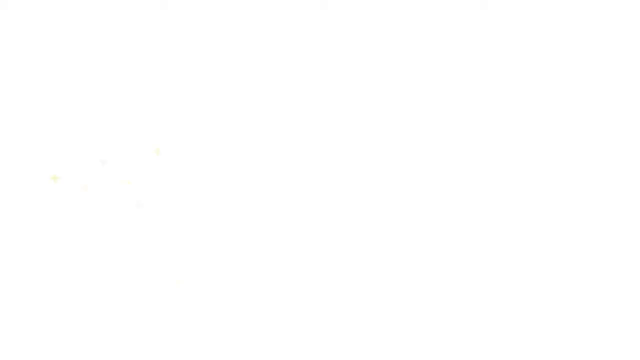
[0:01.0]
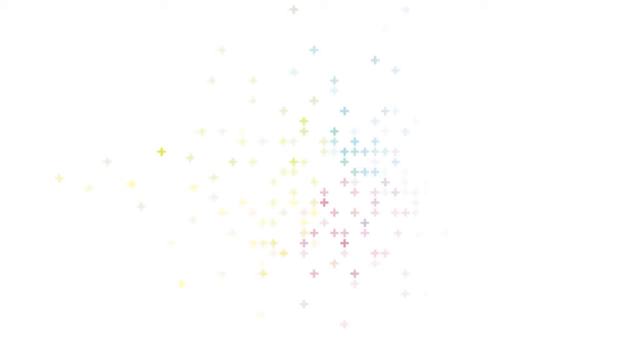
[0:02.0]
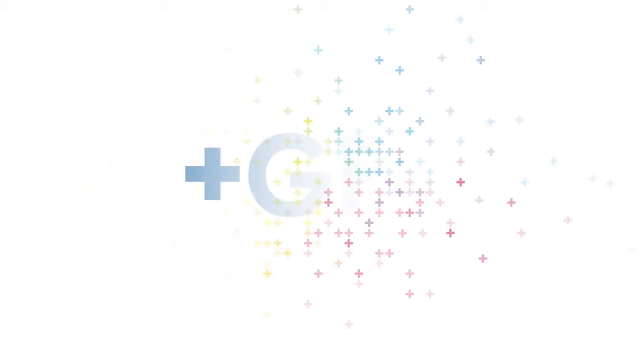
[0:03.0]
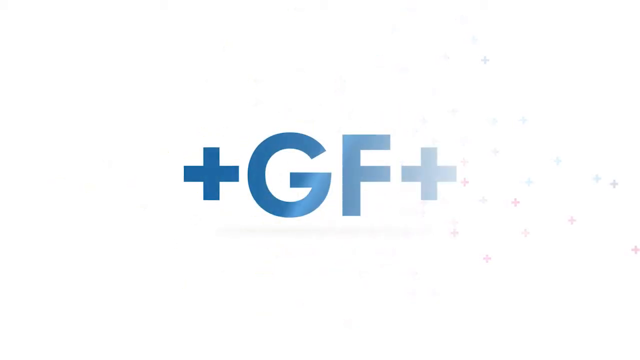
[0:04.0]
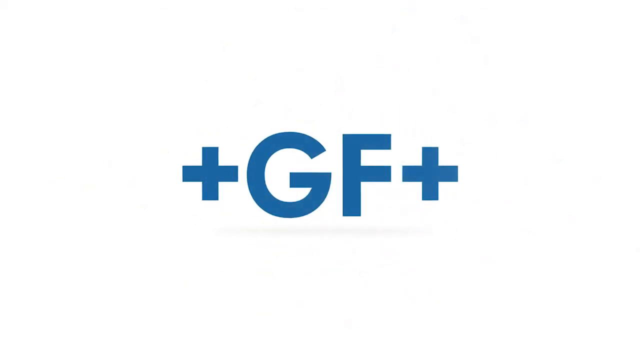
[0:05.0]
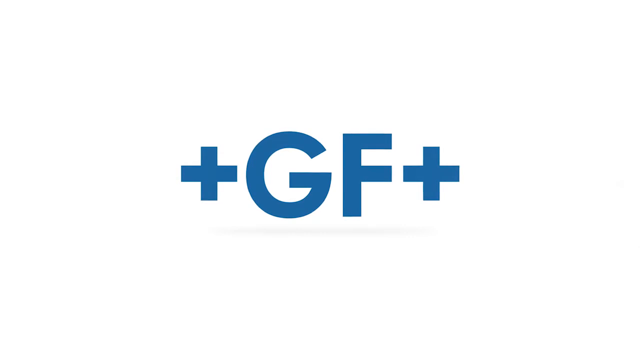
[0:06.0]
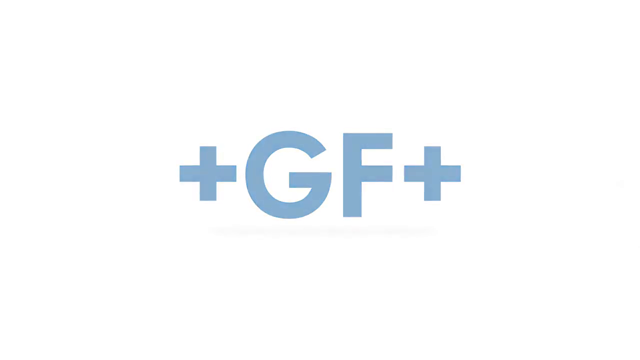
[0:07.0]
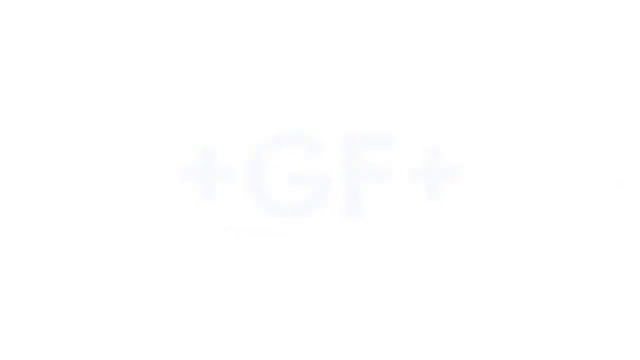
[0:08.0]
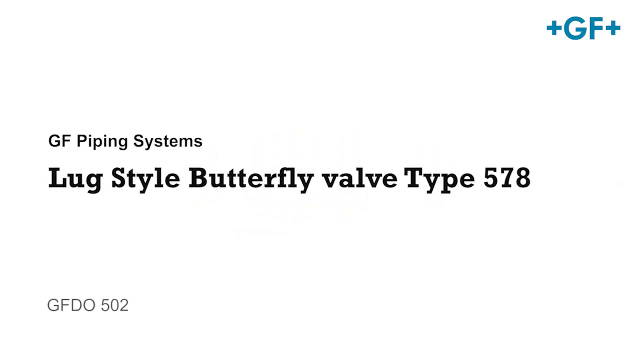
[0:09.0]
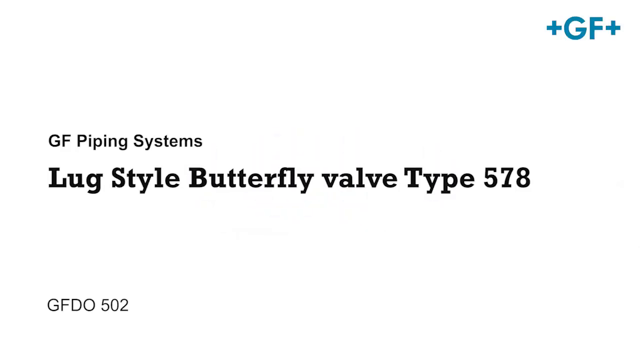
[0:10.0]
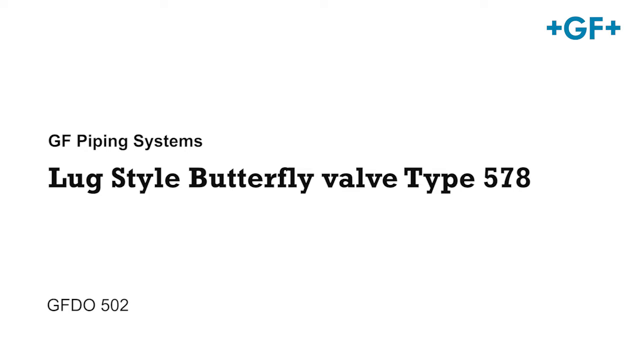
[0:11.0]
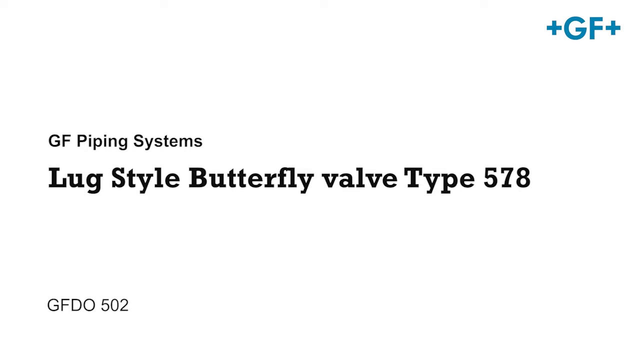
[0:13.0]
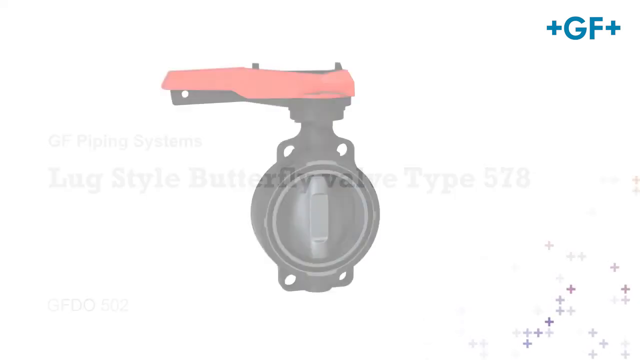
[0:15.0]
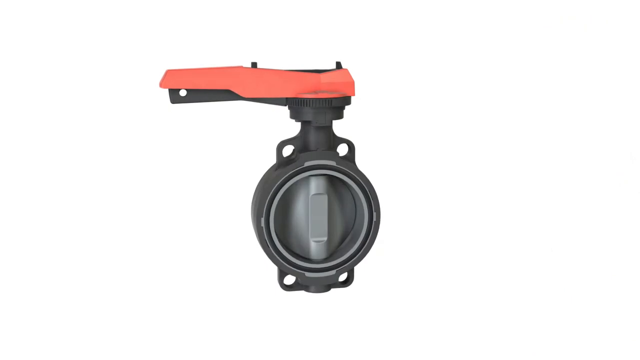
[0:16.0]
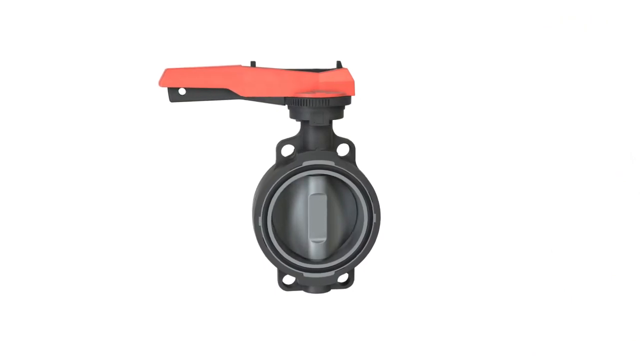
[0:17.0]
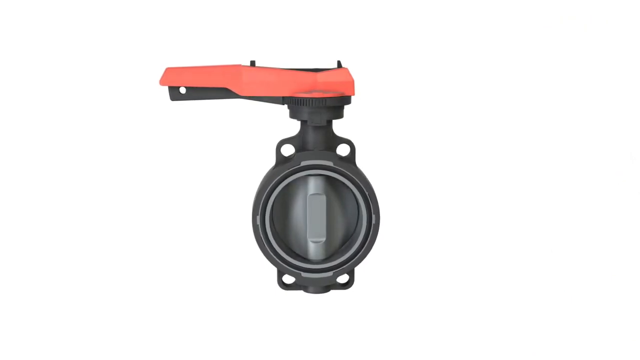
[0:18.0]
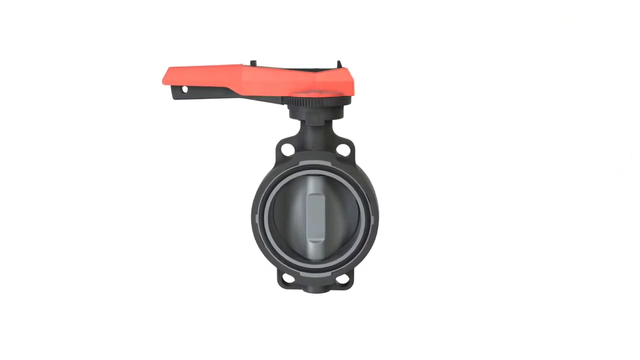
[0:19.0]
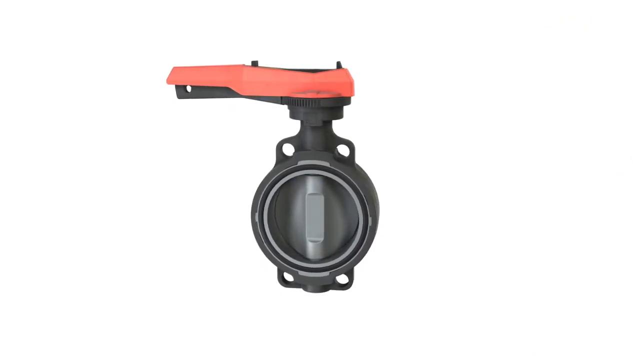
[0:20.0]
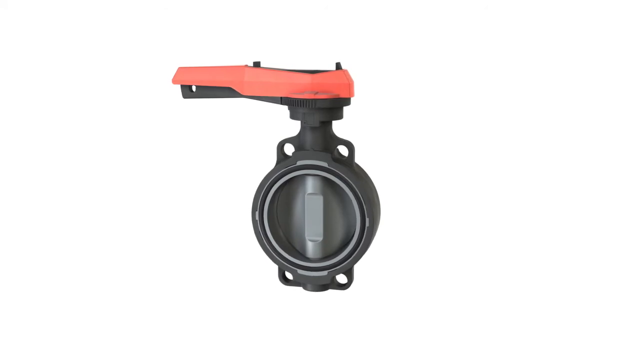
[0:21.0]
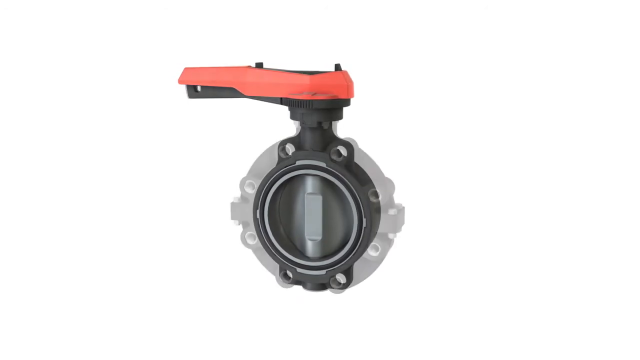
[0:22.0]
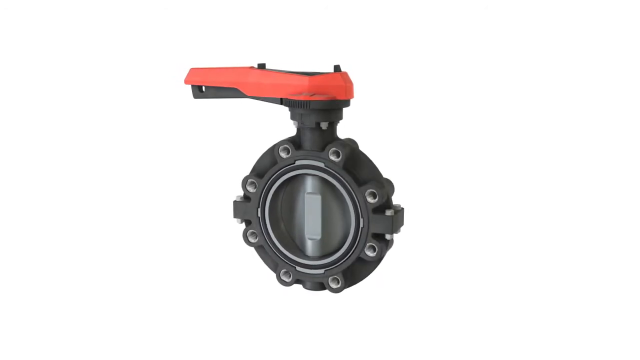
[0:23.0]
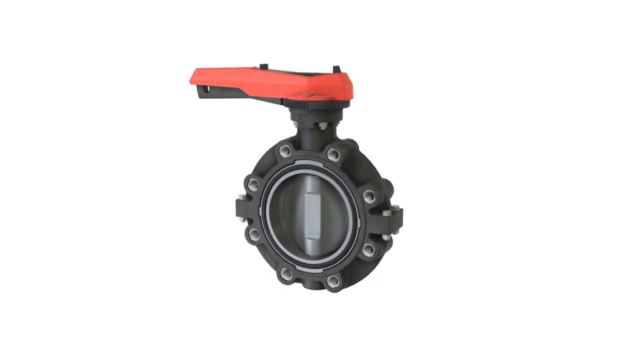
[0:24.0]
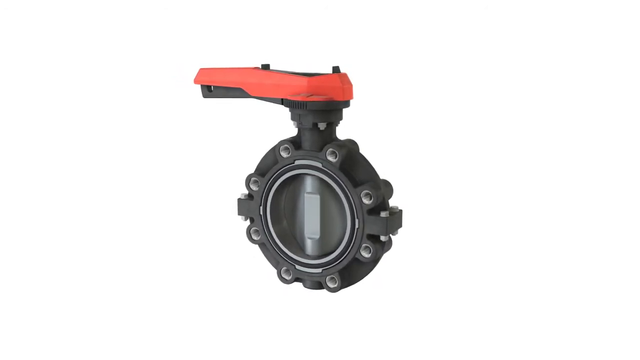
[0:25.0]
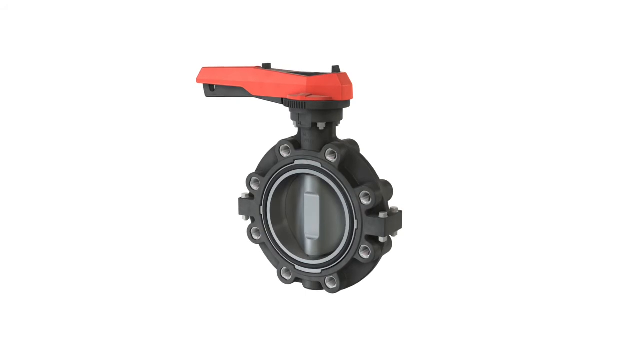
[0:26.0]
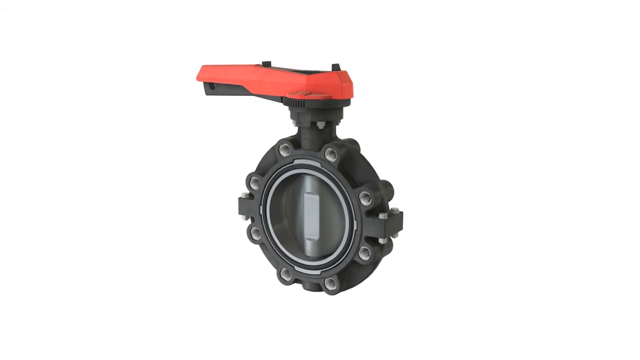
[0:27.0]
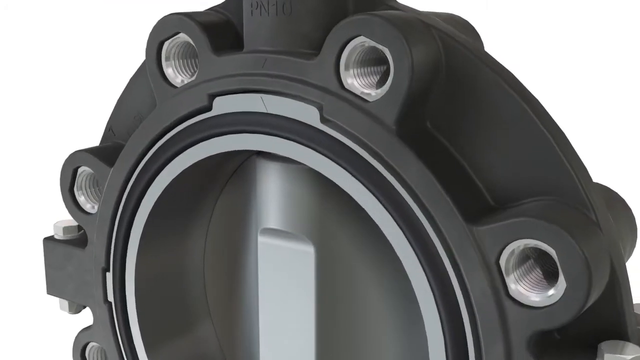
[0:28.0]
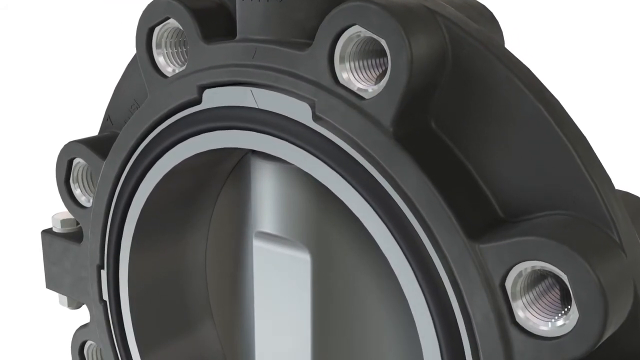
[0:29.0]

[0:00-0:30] The video opens on a white screen, then multiple cross shapes appear in many different colours, such as yellow, purple, pink, red and blue. These fade from left to right, and then large blue text across the centre of the screen reads "GF" with two plus symbols on either side and a slight shadow below. This fades out, and black text on the left-hand side of the screen reads "GF piping systems", with "lug style butterfly valve type 578" in bold underneath and "GFDO502" in the bottom left. In the top right is the GF symbol with the two plus symbols on either side. A valve then appears on the screen: a black device, circular at the bottom, with a cog function at the top and a red handle. More appears on it at the bottom so it starts to look more like a wheel, and then the view zooms in to show the screw fittings within it.